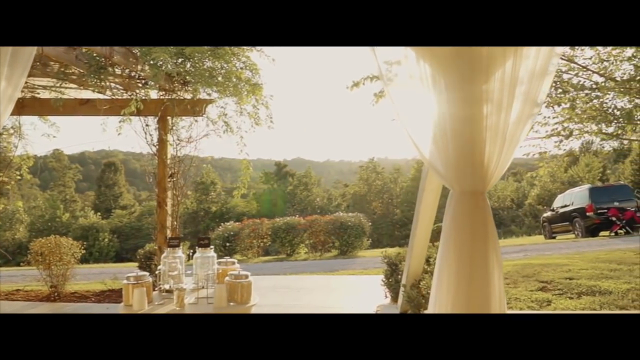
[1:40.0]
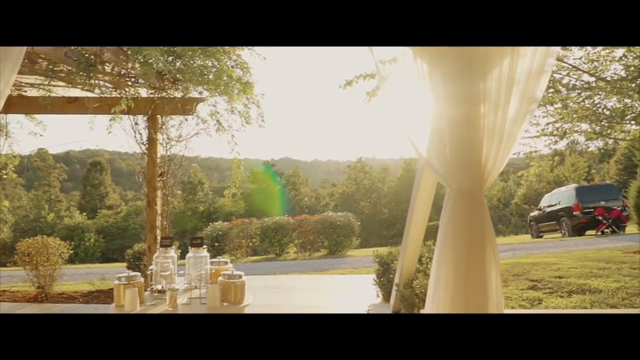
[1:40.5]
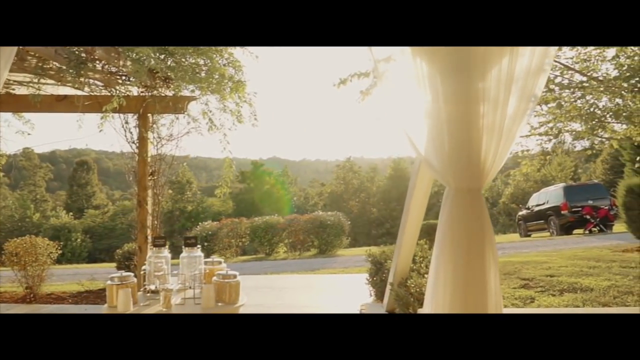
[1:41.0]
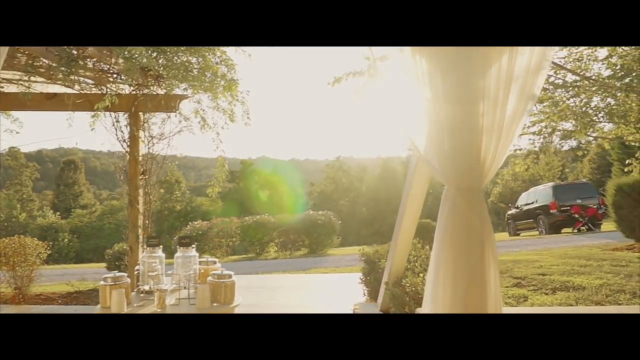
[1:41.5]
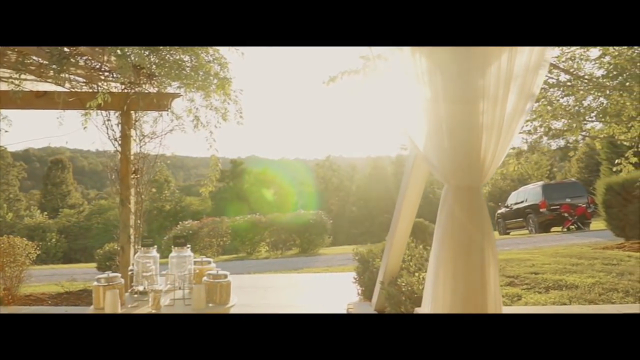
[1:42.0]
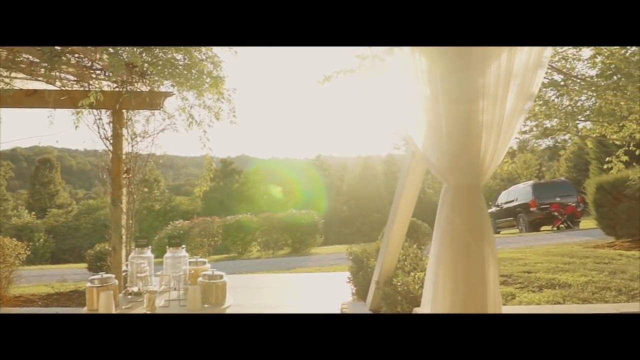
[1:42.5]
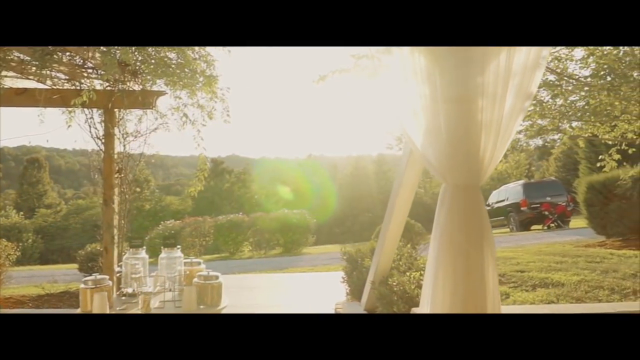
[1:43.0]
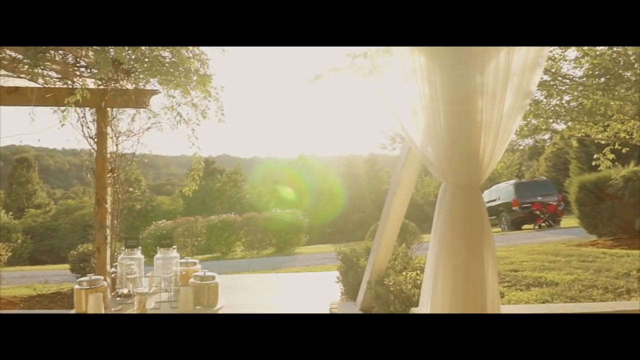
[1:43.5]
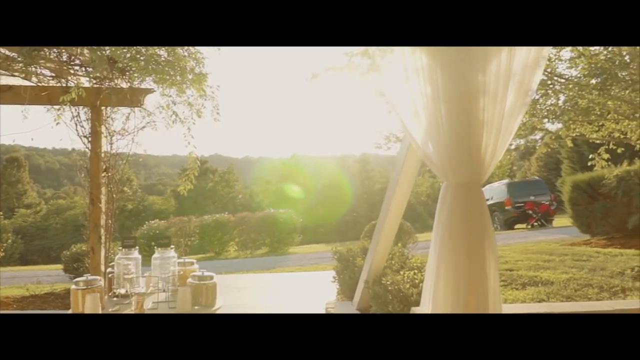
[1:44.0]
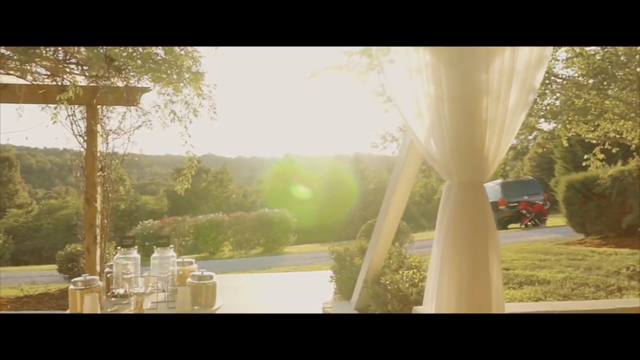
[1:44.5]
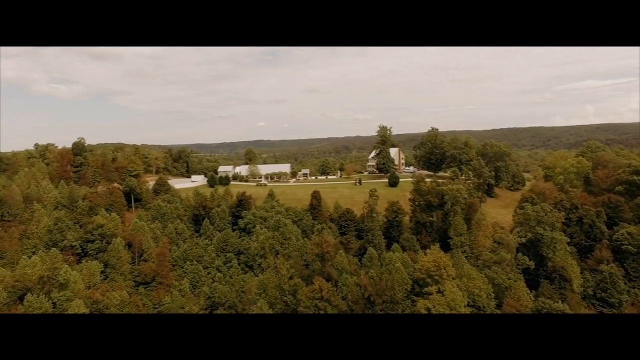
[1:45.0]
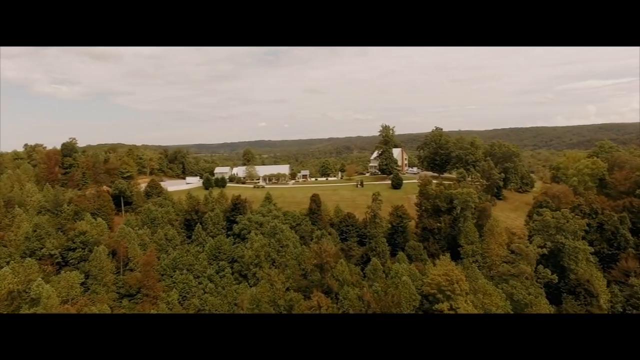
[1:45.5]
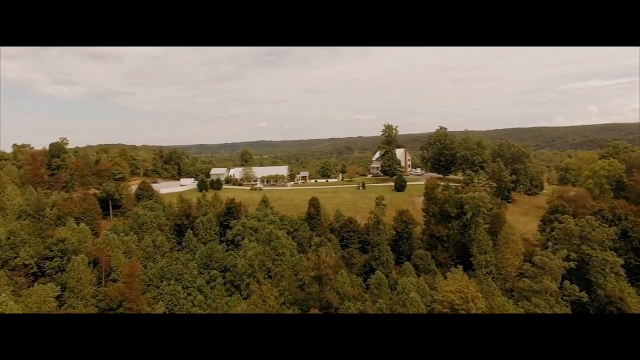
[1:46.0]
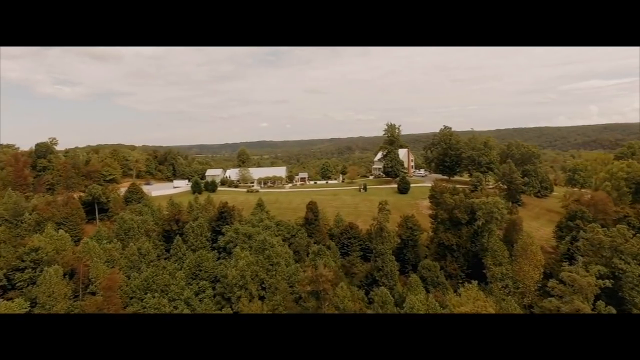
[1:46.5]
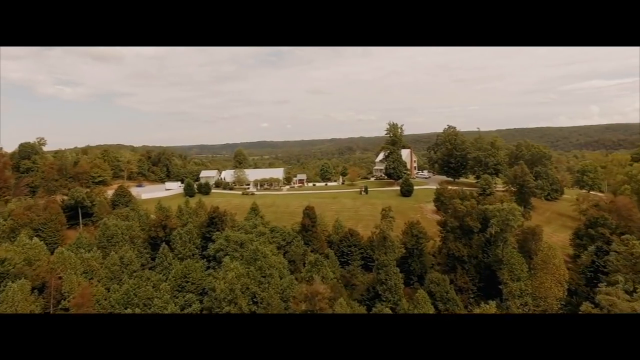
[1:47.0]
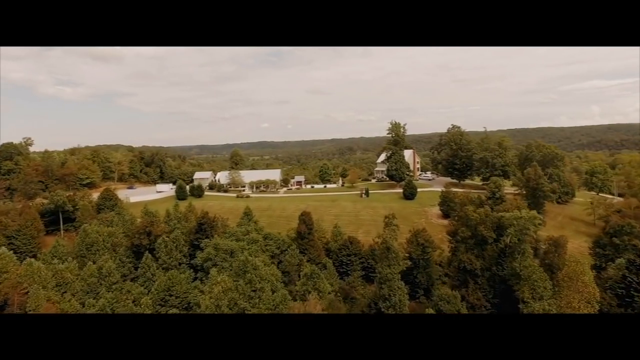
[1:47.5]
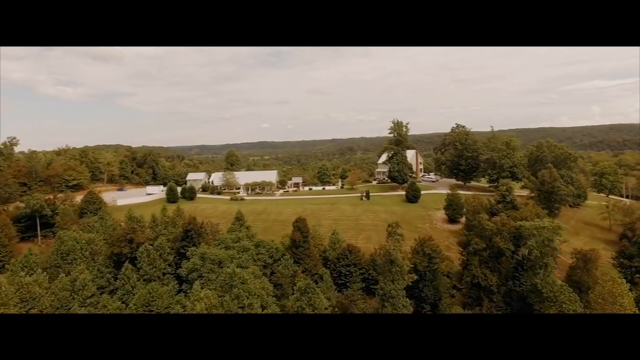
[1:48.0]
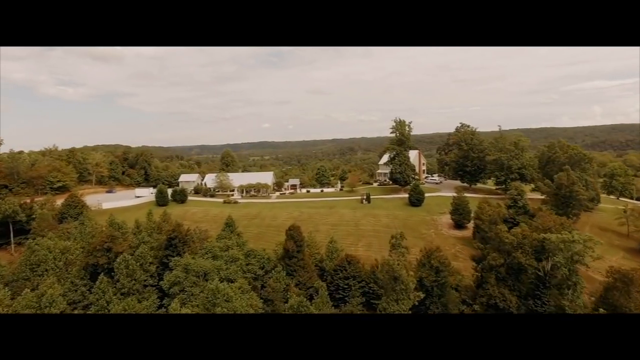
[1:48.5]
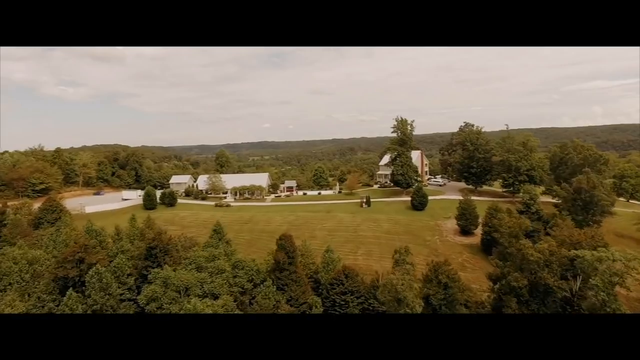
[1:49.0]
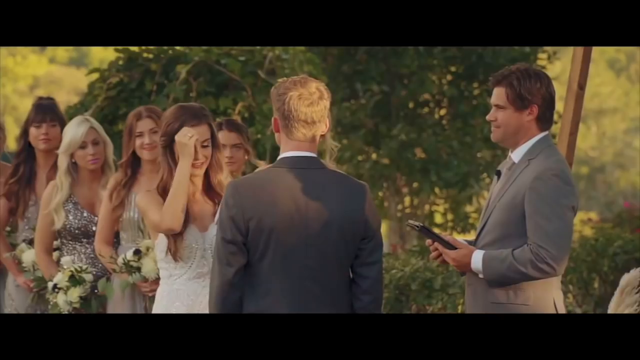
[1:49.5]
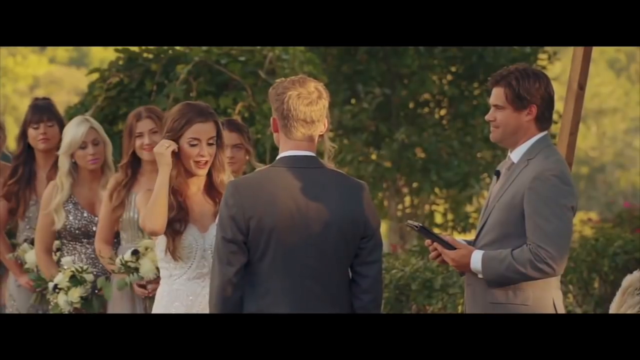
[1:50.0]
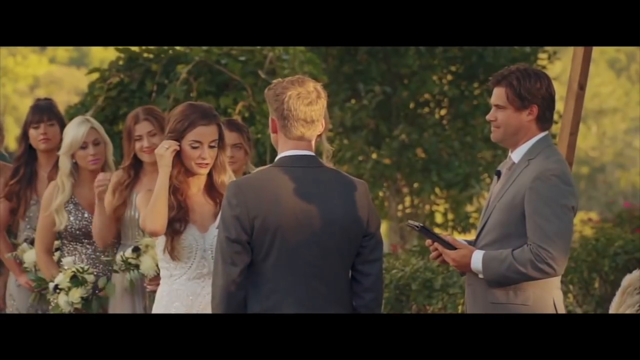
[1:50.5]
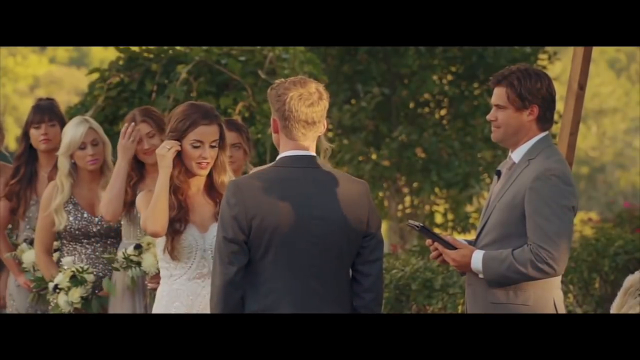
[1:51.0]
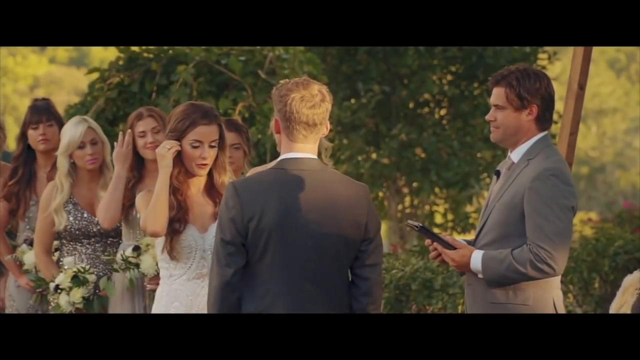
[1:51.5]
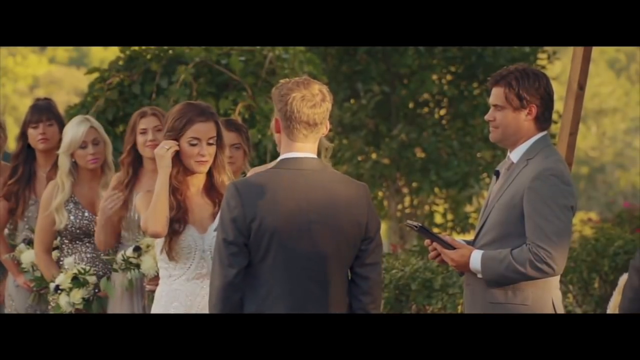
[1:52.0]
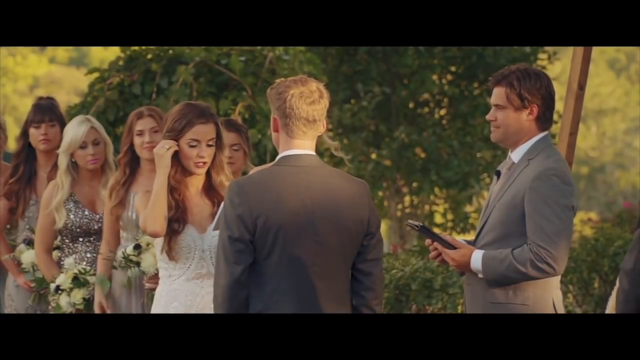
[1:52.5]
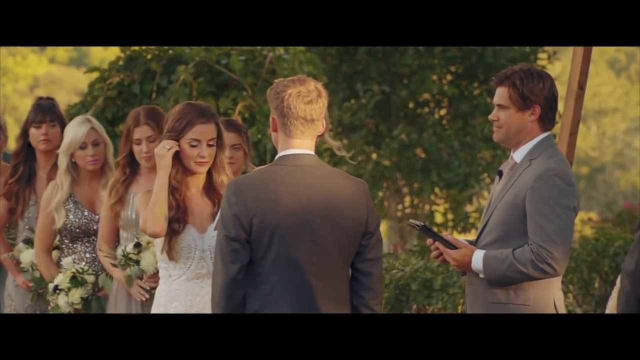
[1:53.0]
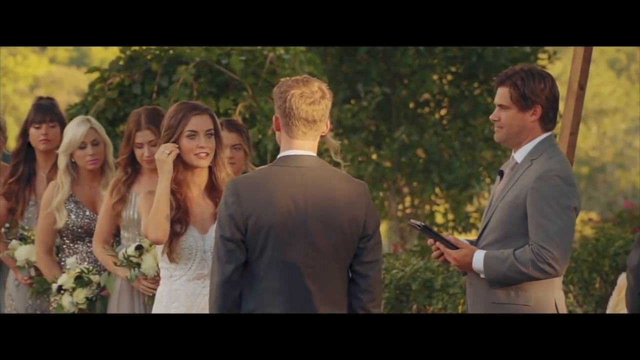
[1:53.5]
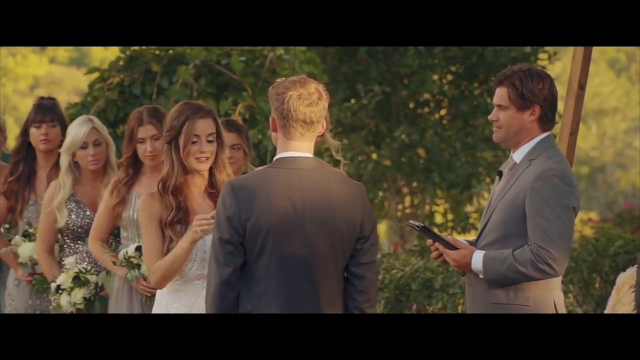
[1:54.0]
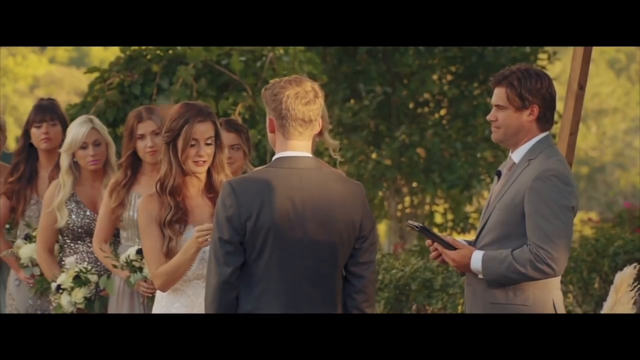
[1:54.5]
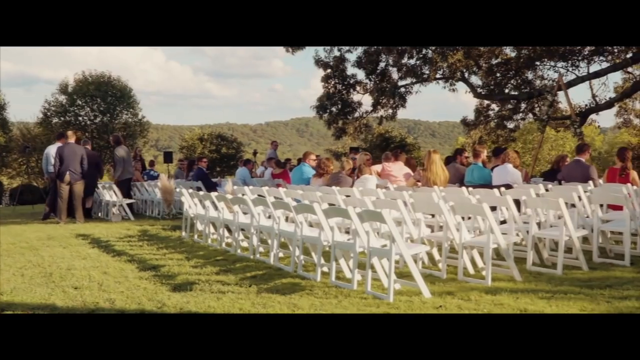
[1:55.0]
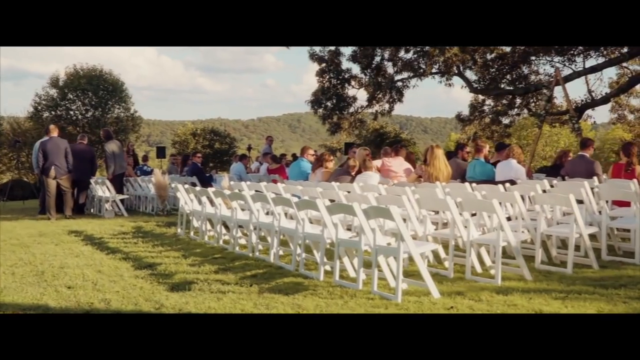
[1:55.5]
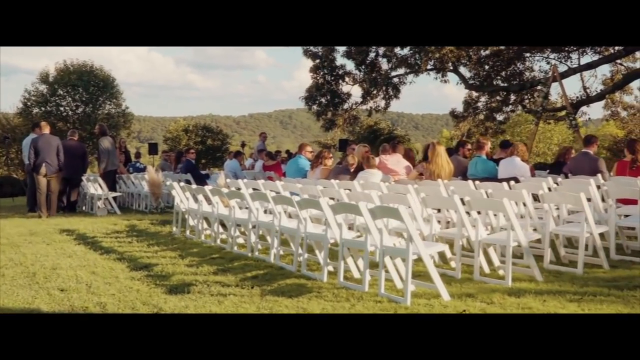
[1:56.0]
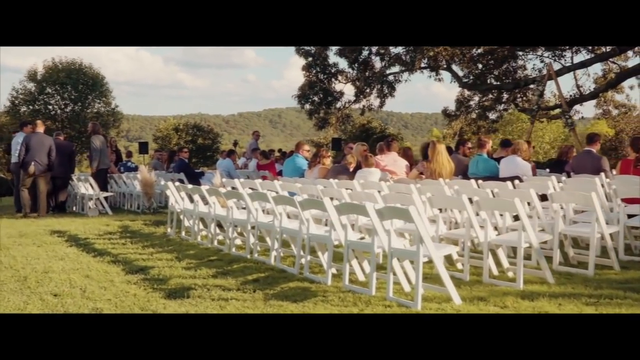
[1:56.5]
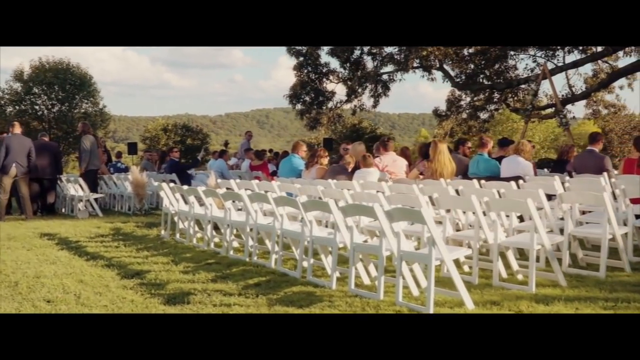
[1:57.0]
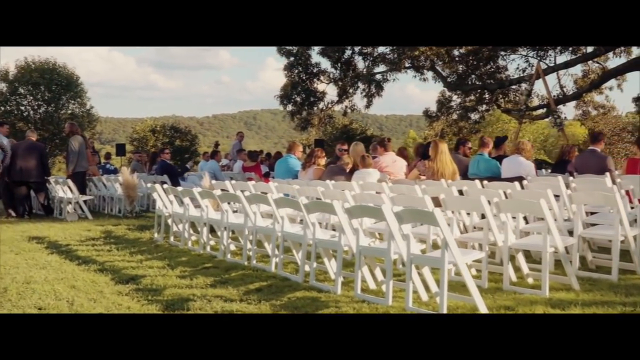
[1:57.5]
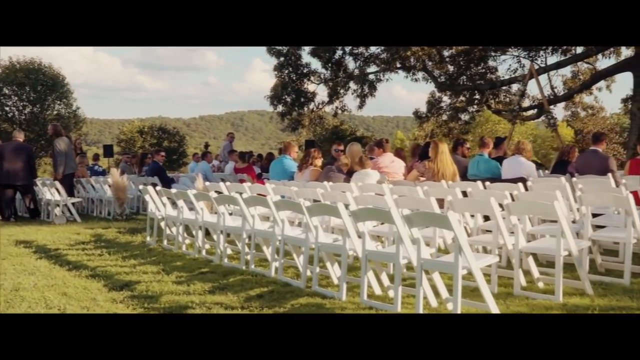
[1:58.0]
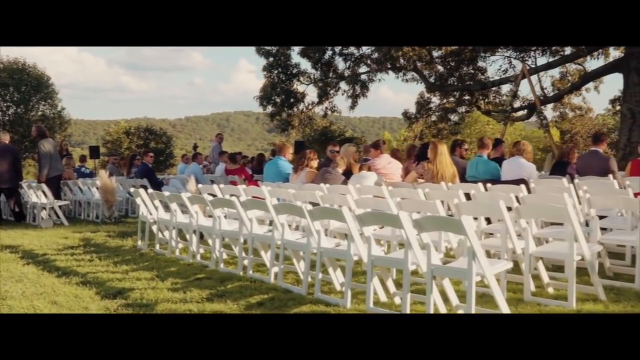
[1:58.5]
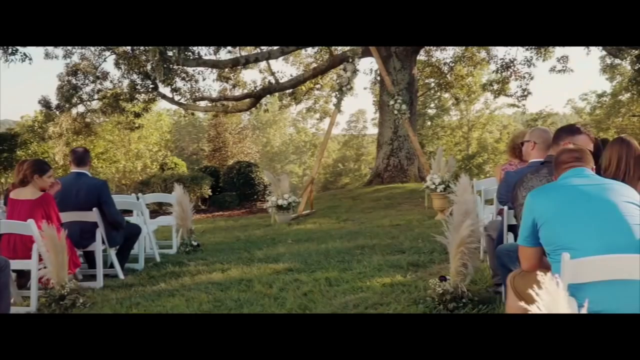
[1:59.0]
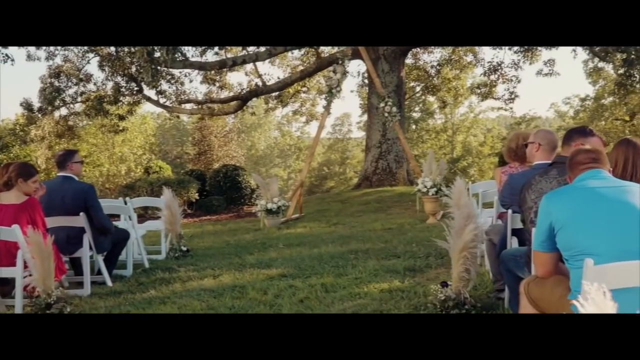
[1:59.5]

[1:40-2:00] The camera shows the venue from outside, with a street in the far shot, and then films inside the venue. On the left side of the shot is what looks like a table with items on top of it, and on the right side are white curtains. In the top left of the shot are a white casing and a wooden balcony with what looks like a vine grass roof. A well-kept road and a street are shown, with a black SUV on the right side of the screen. The sun appears on screen as the camera pans to the left, with reflections on the camera, and the camera moves into the venue. The woman is shown again briefly before the cameraman gives a view of the guests, who are all seated on chairs.